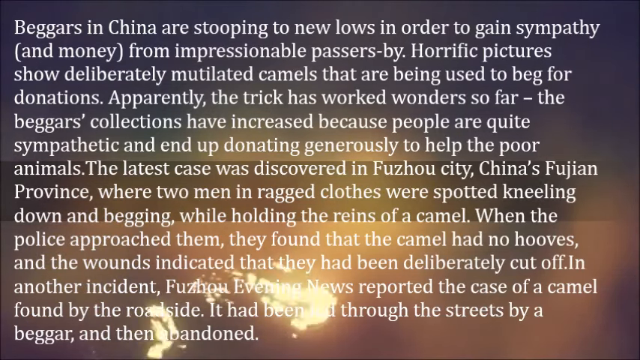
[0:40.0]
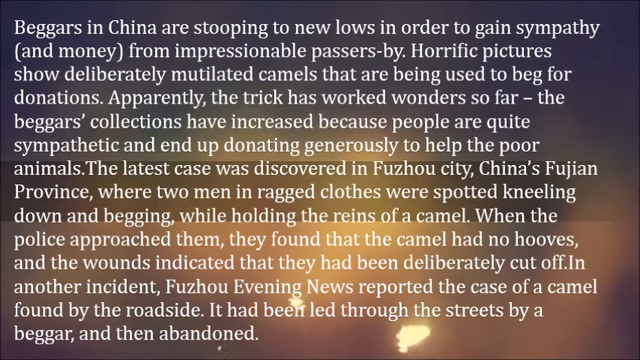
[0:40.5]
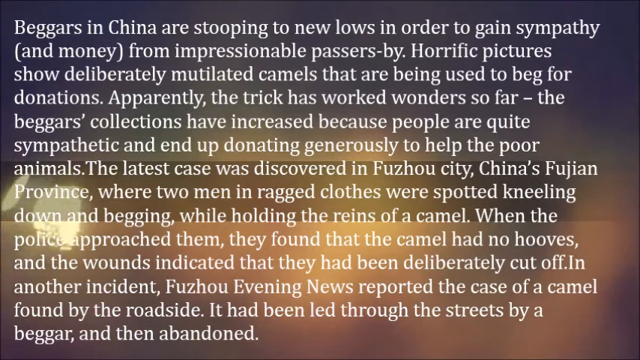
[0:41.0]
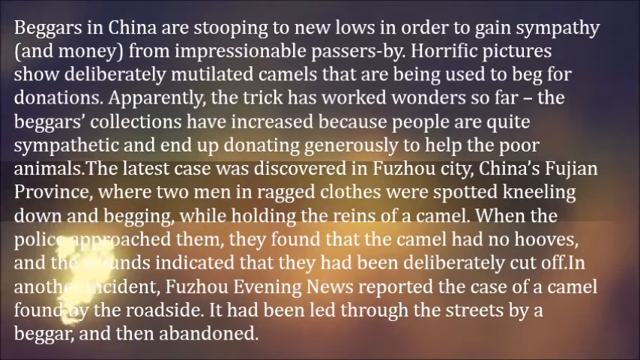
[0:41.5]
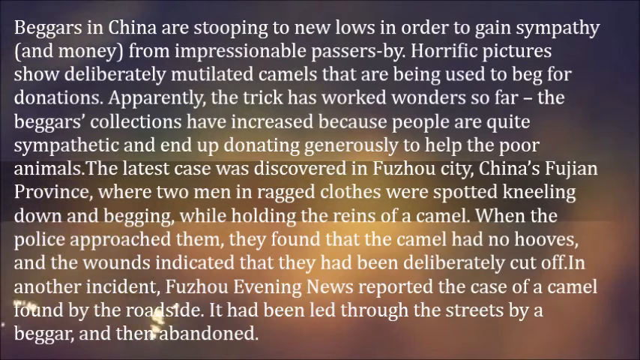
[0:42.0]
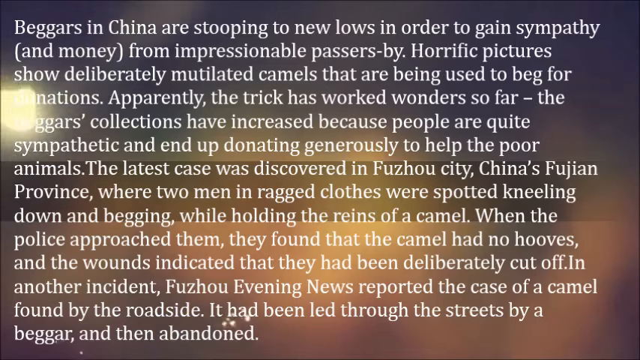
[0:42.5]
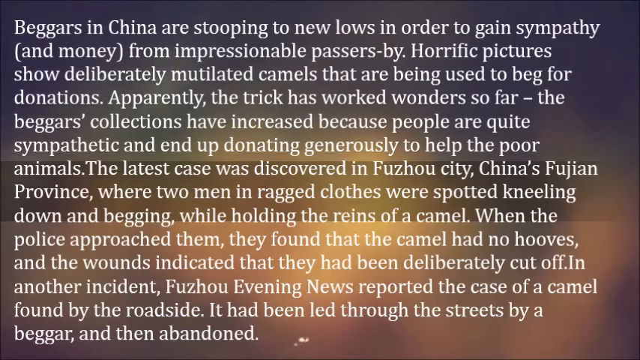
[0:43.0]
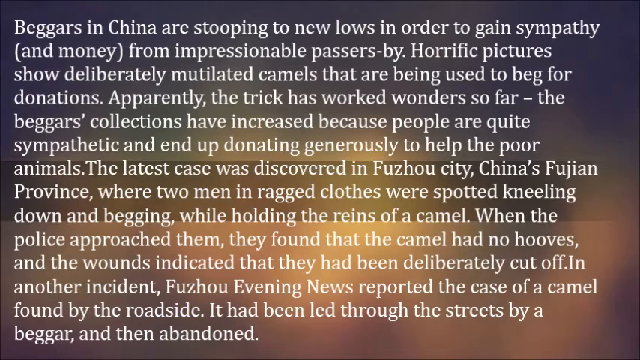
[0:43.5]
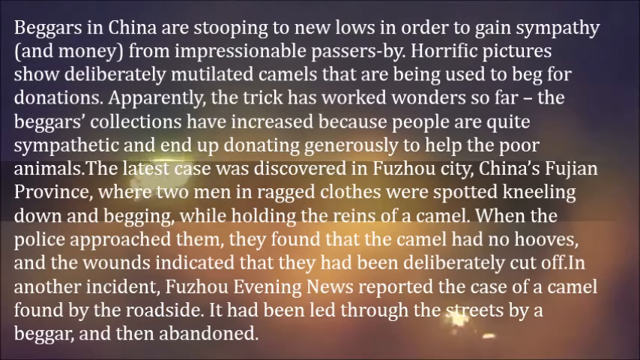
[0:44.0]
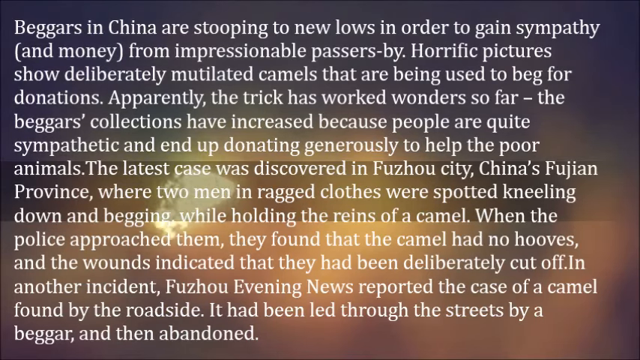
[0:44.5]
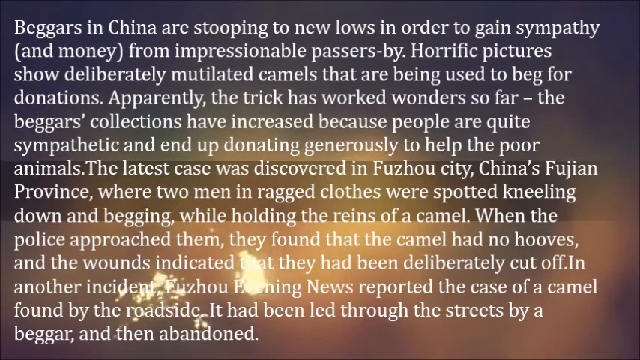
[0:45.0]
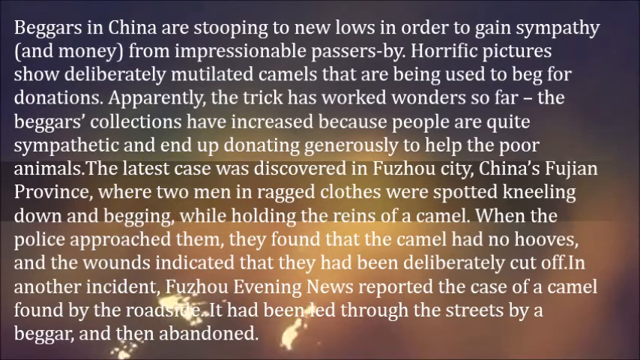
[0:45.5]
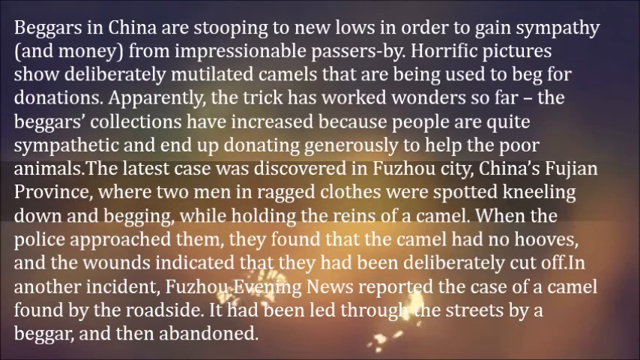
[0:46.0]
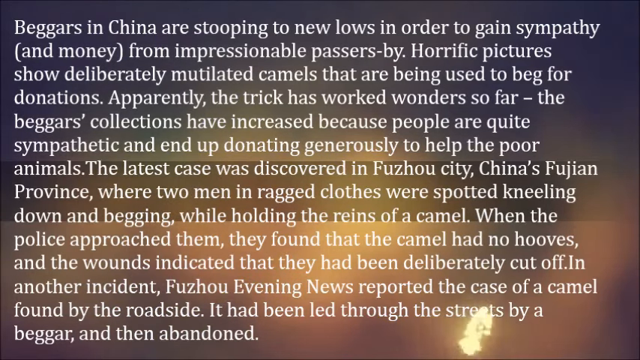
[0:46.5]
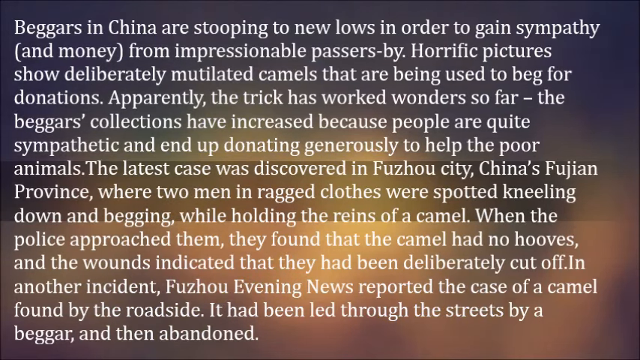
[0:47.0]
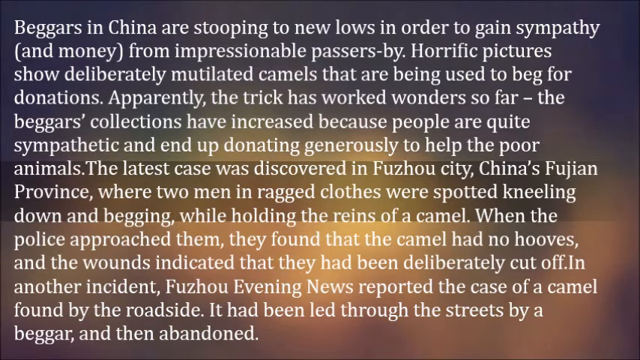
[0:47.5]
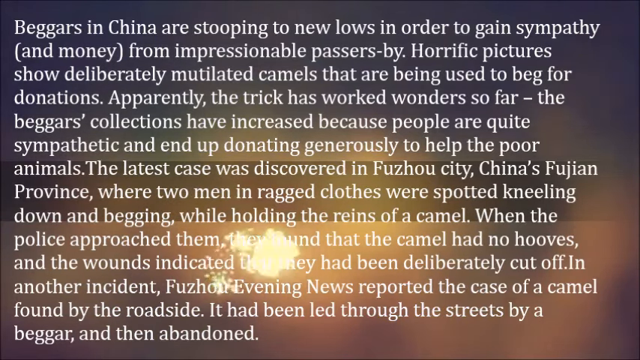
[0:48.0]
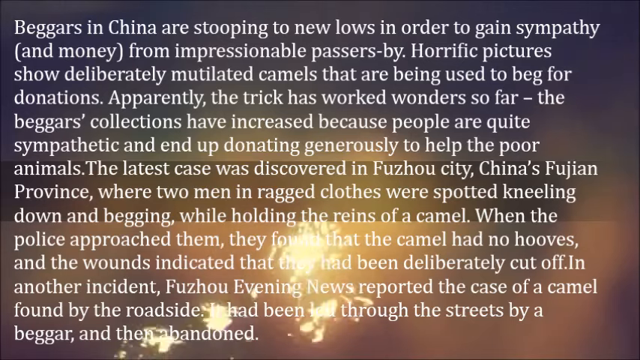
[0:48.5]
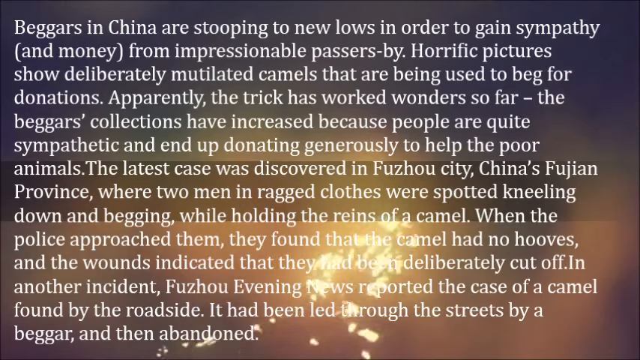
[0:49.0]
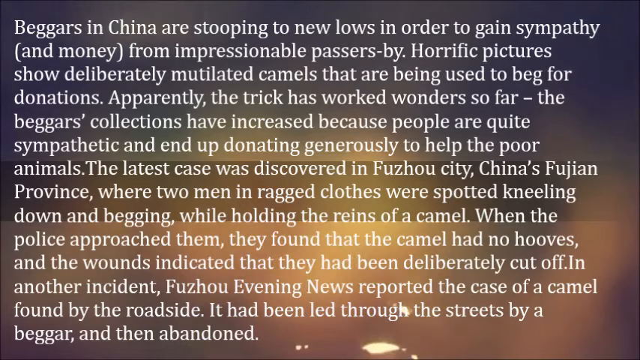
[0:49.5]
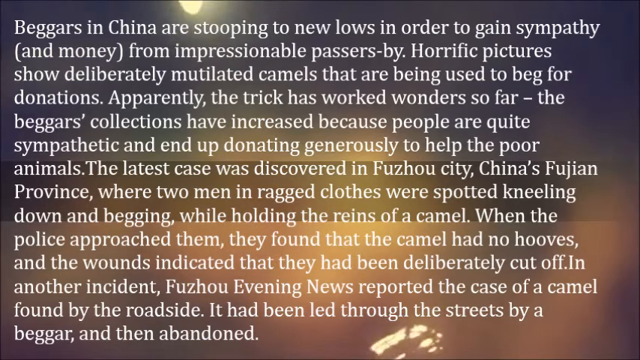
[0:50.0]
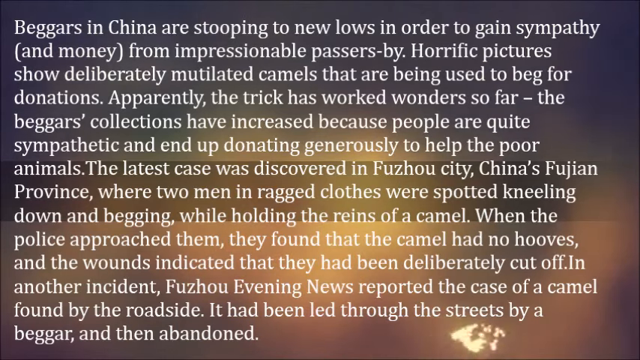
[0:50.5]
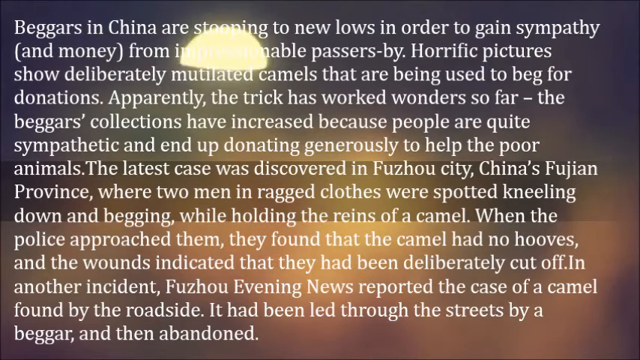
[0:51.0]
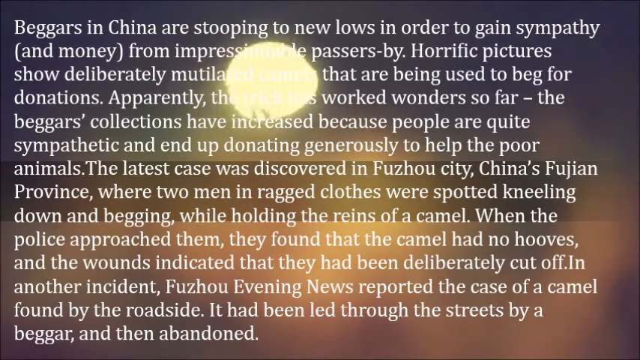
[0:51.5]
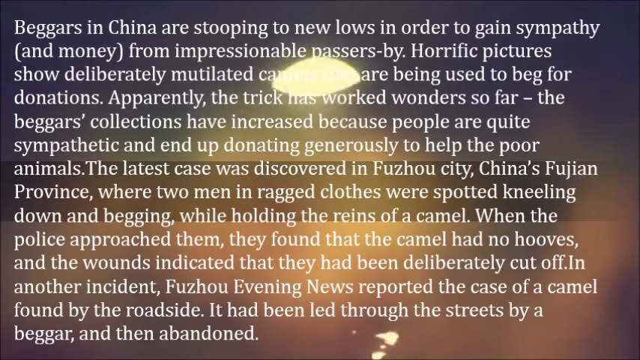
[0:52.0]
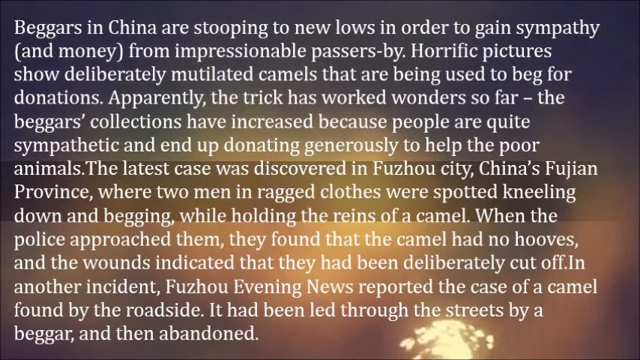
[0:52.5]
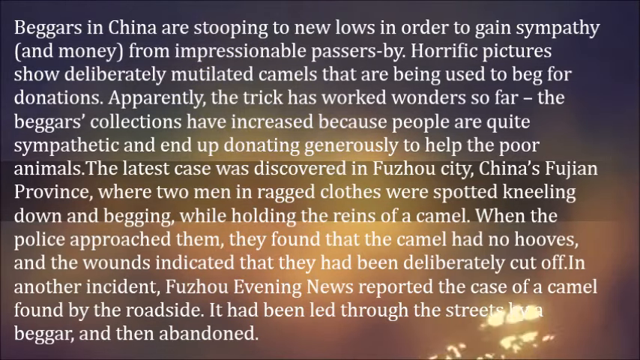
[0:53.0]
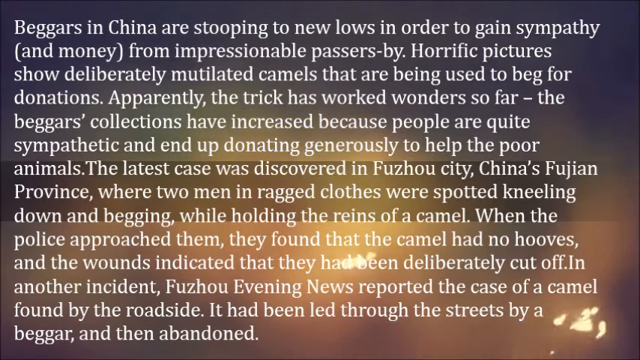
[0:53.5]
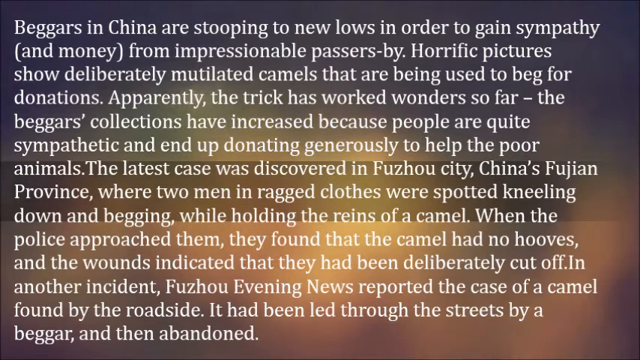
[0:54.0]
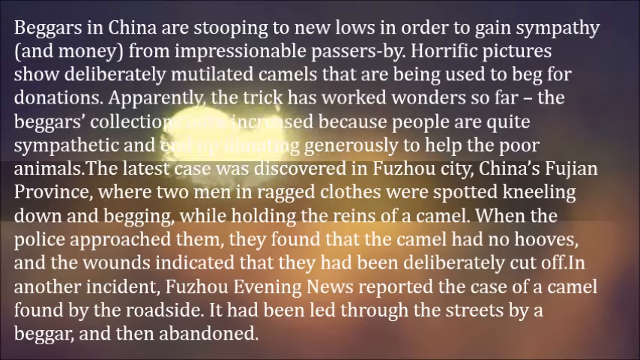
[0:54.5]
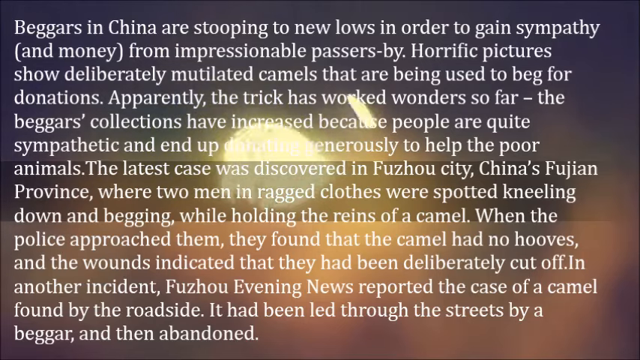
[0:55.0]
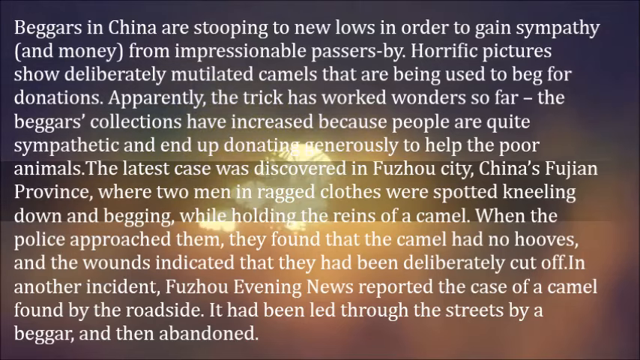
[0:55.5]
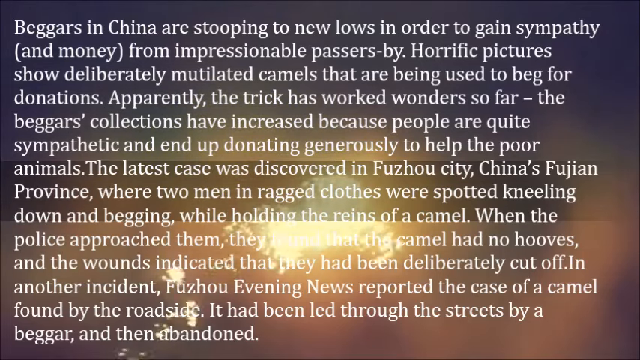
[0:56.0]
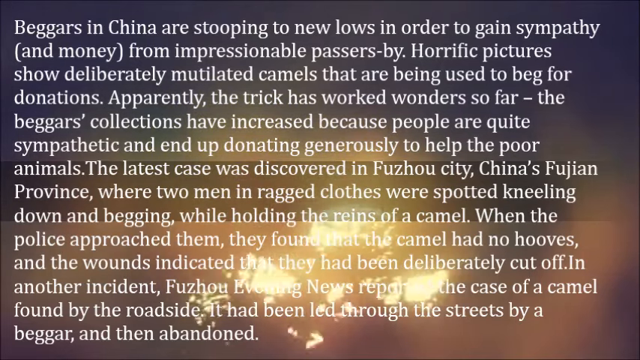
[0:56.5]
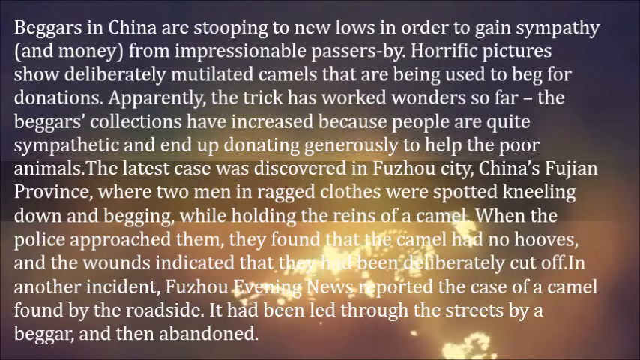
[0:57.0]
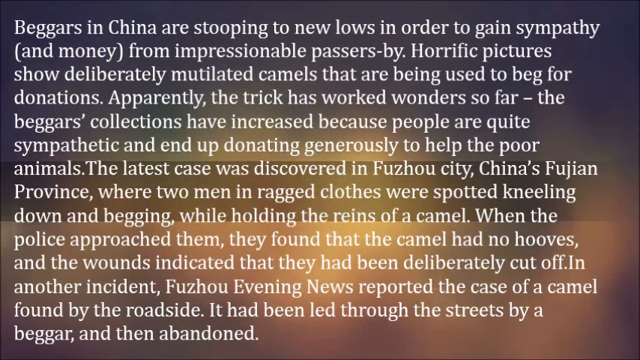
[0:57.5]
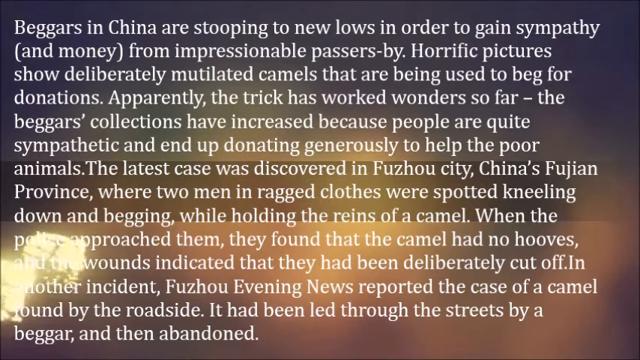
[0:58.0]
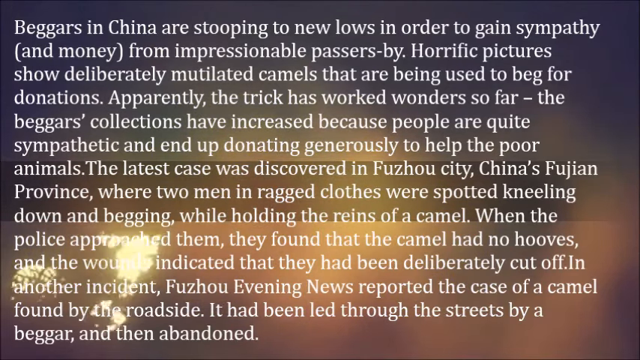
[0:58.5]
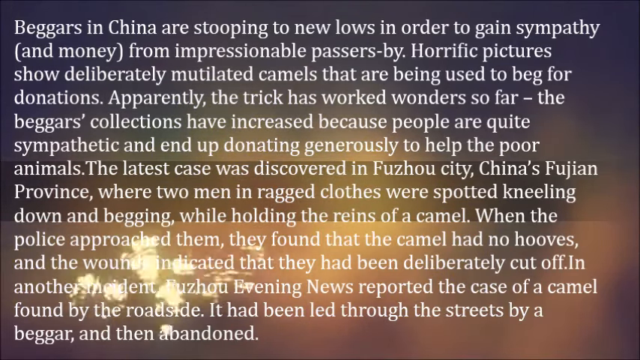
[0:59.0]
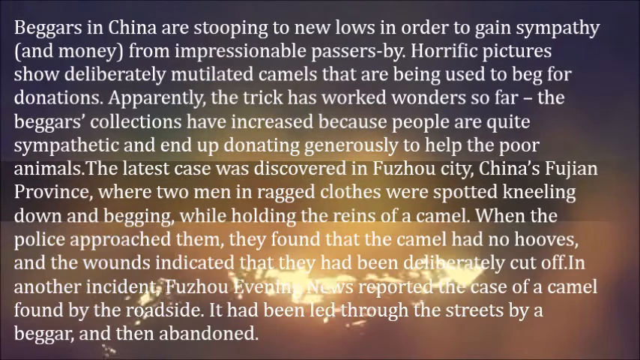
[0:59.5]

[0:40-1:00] A great deal of white text fills the screen, describing how beggars in China hurt and injure camels, cutting off their legs or hooves, to elicit sympathy from passersby. The text stays on the screen for quite some time. In the background are what appear to be shining images of water passing by. The screen is various shades of brown and gray, with glimmers or hints of gold and yellow in the background. The text mentions the trick that beggars in China are playing and a case in Fuzhou City, China, where two men in ragged clothes were spotted kneeling down and begging while holding the reins of a camel. When the police approached, they found that the camel had no hooves and there were wounds on the stumps, indicating that the men had perhaps deliberately mutilated the camel to collect money from passersby.